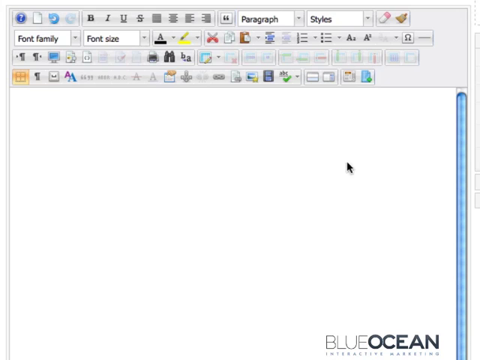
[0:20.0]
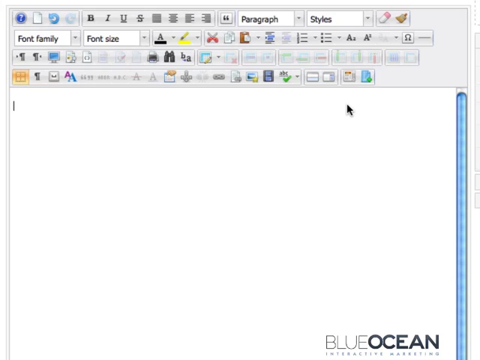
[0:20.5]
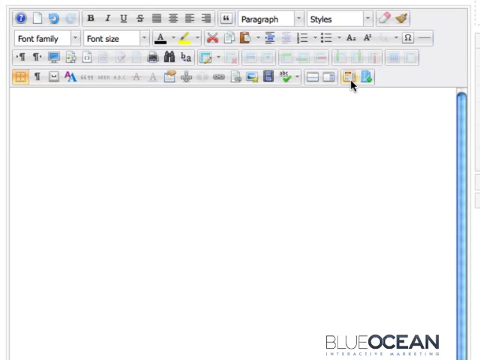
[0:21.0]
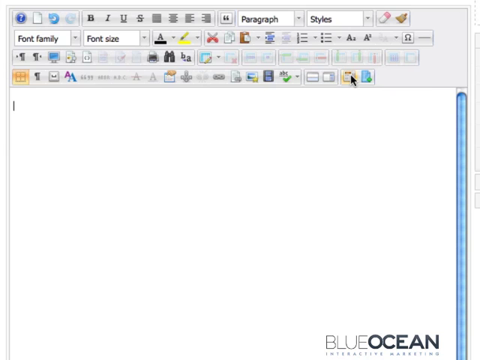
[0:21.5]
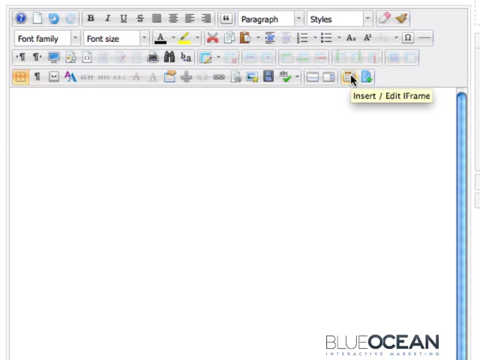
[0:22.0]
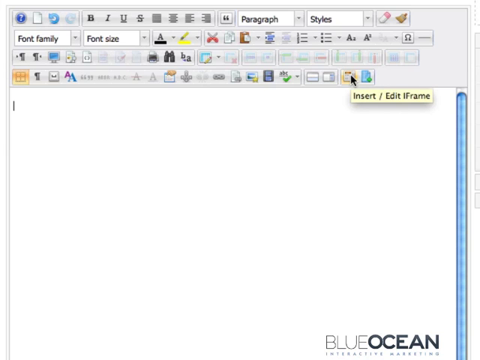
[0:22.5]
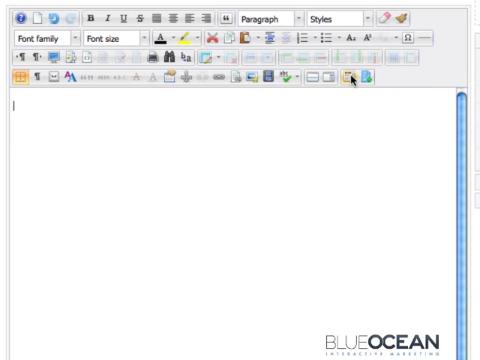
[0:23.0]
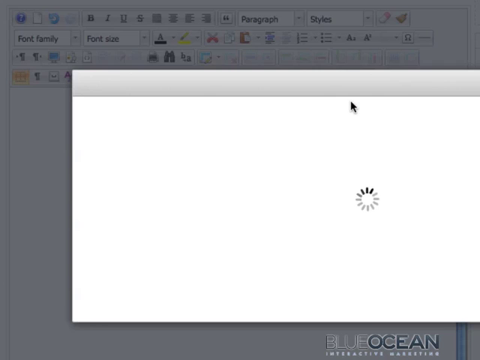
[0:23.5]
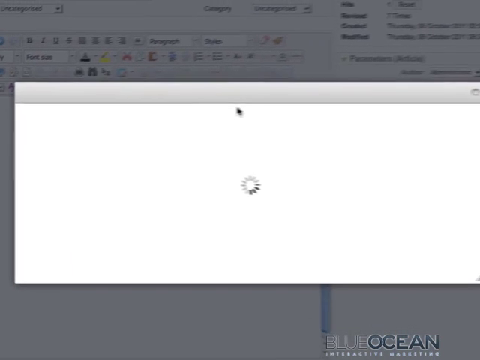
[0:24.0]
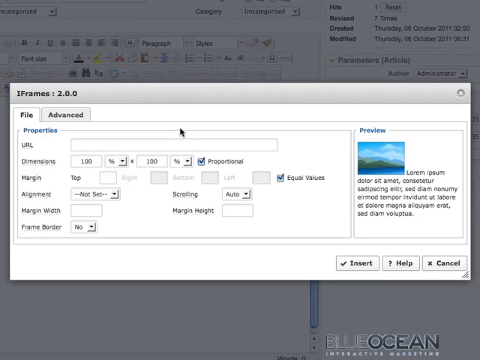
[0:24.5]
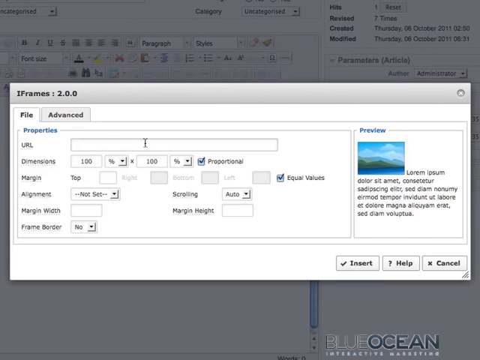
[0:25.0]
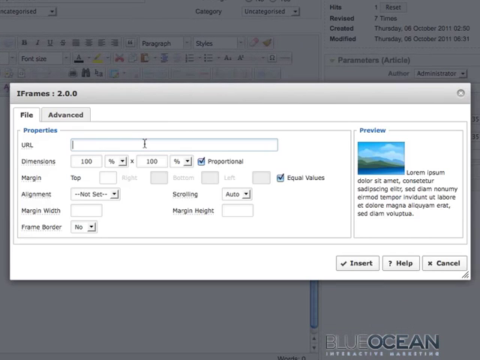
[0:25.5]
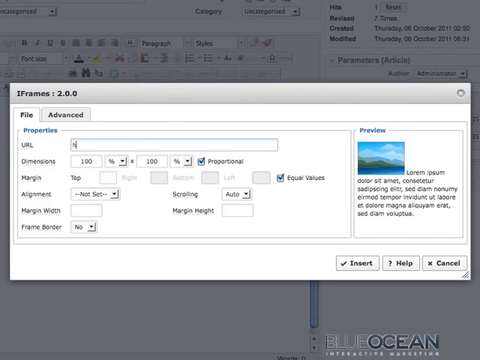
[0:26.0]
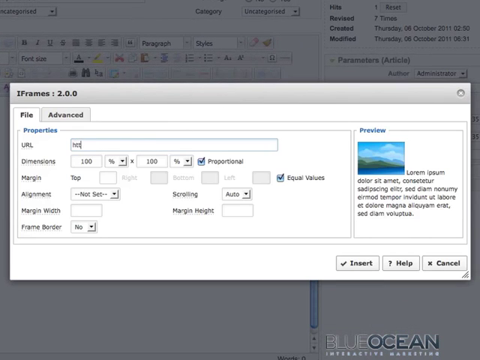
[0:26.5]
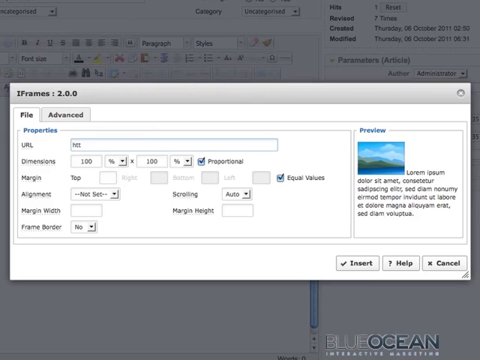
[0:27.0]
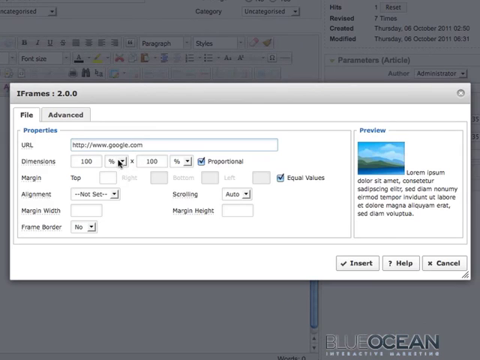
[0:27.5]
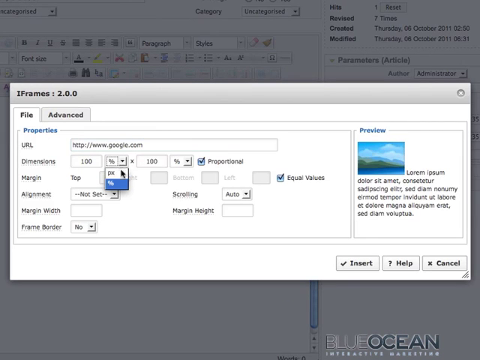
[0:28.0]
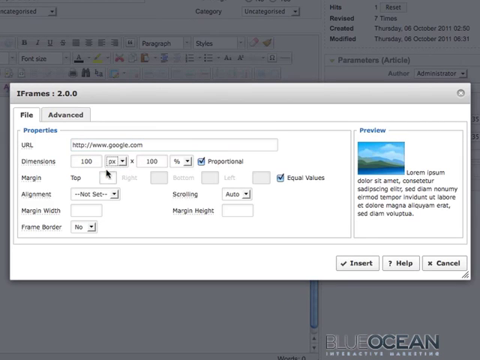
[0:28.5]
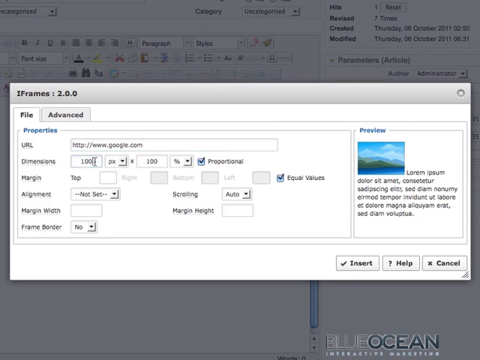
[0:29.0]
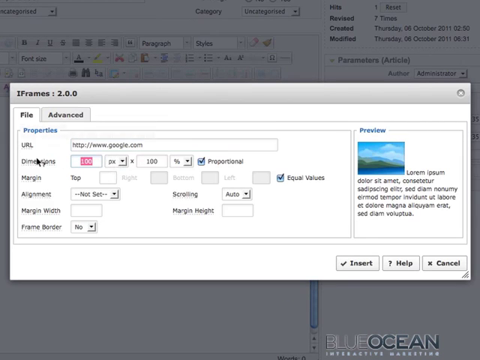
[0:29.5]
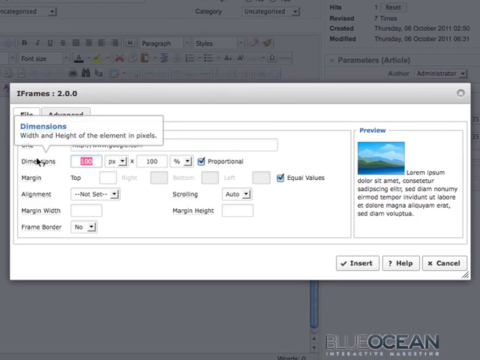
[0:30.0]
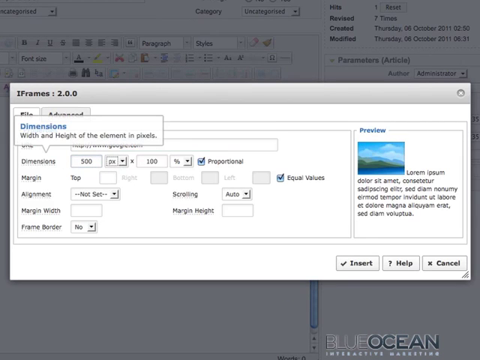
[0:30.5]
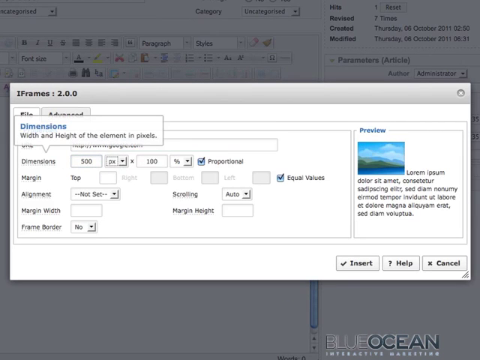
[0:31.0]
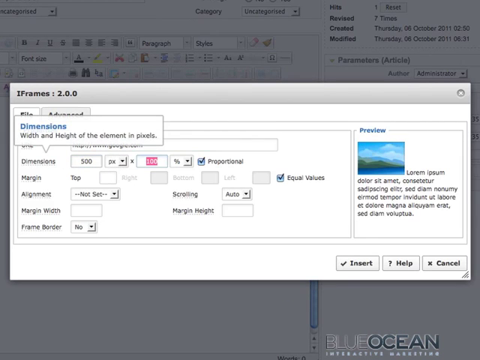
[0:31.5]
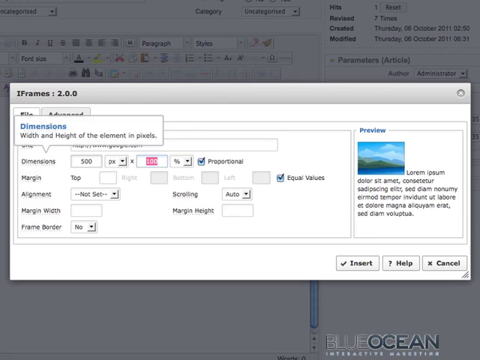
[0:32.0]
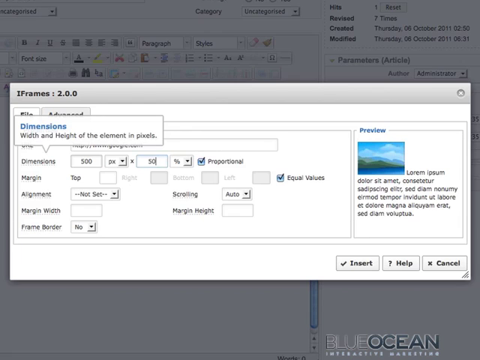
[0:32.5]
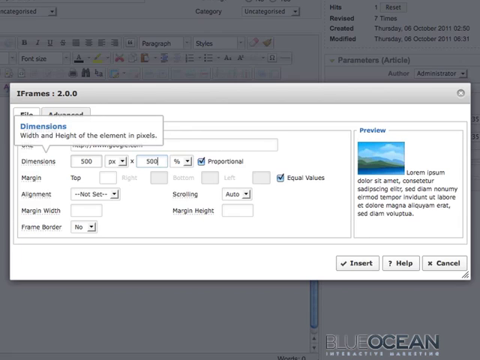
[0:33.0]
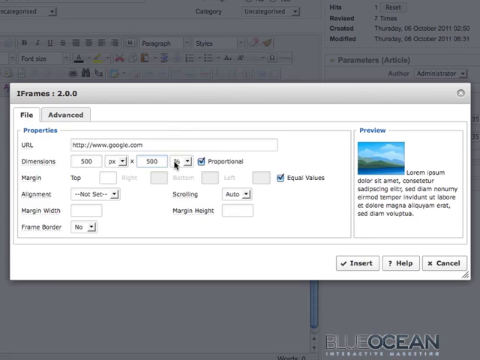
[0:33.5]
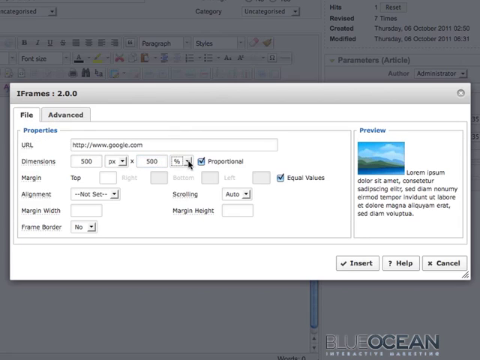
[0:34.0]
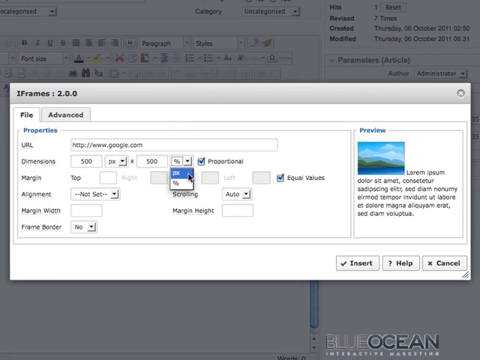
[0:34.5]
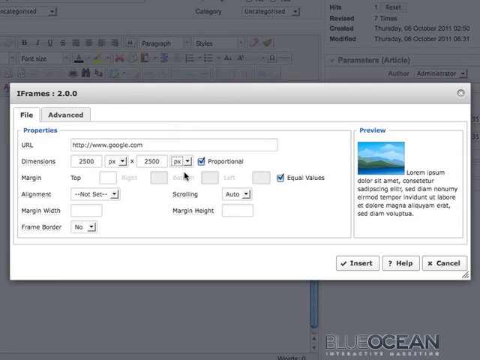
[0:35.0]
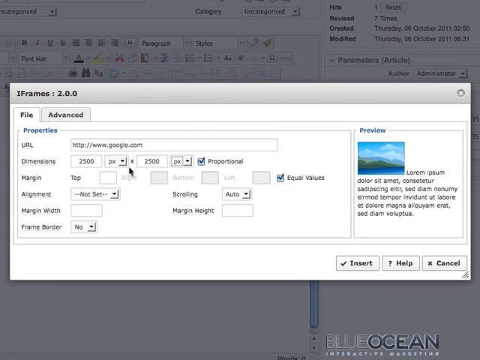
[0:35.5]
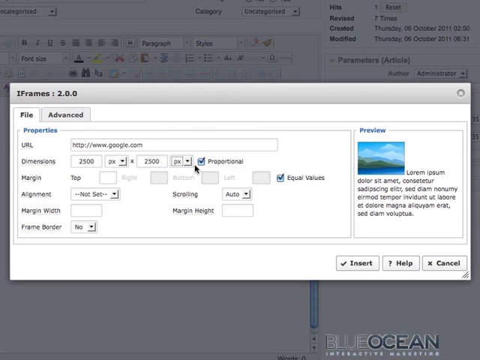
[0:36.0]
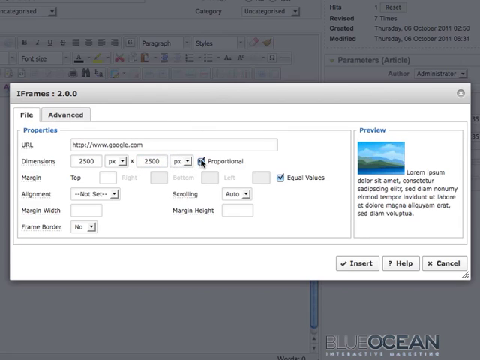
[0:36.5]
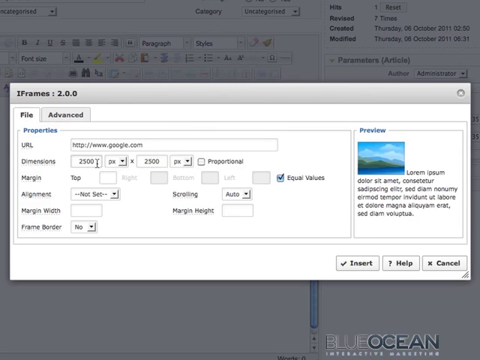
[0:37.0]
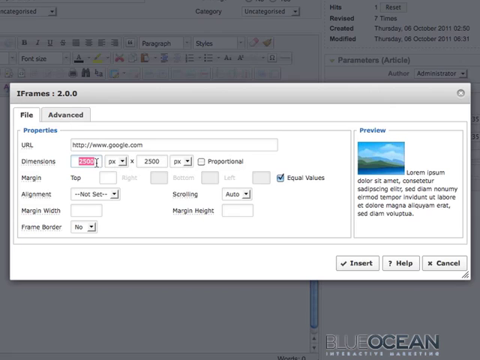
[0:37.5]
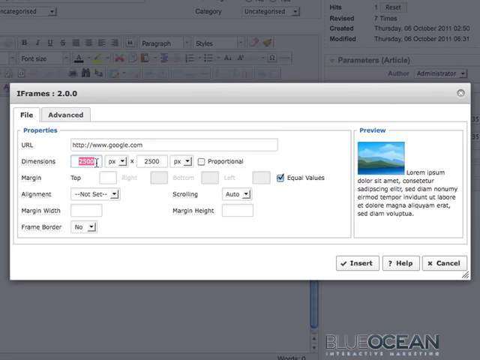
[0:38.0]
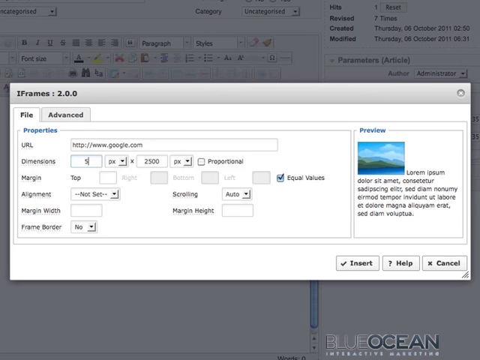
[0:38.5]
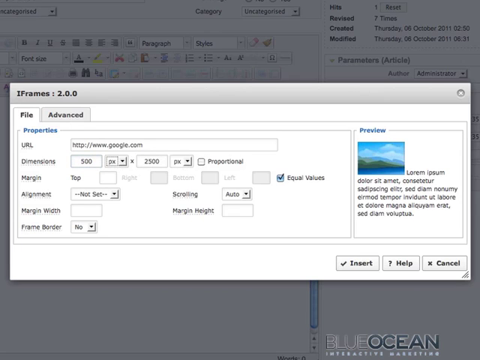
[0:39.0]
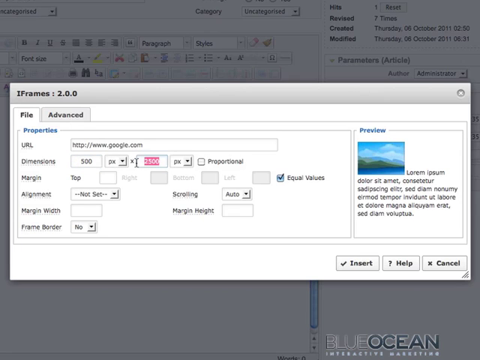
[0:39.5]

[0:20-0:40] Another form is loading. It is not very clear, but something is being typed or clicked in it, with a mouse moving around and clicking repeatedly and selecting a few things. Something blue is visible, along with a progress indicator and a company. The form seems organized, with options for style, paragraph, font family and font size, and it is the same Blue Ocean form as before.